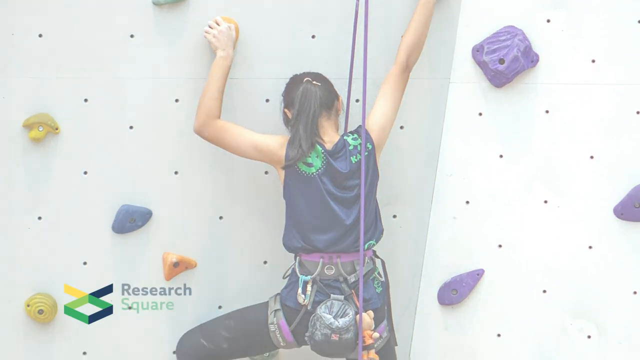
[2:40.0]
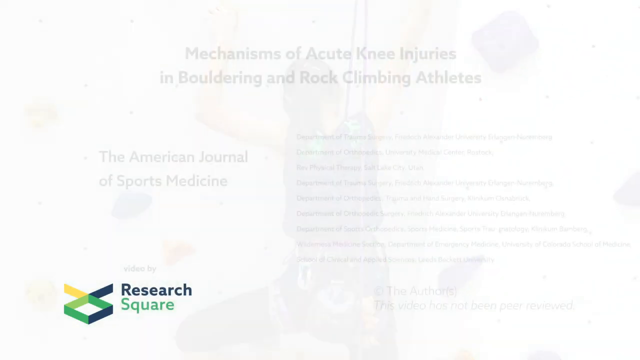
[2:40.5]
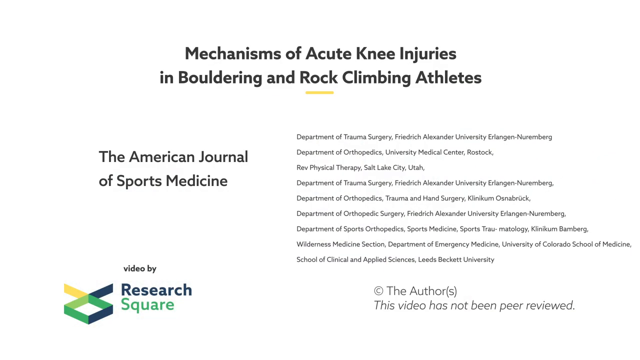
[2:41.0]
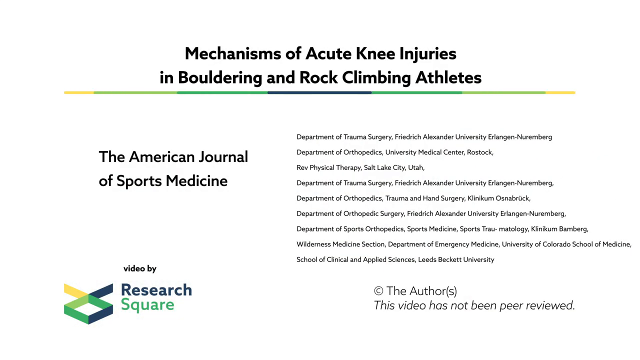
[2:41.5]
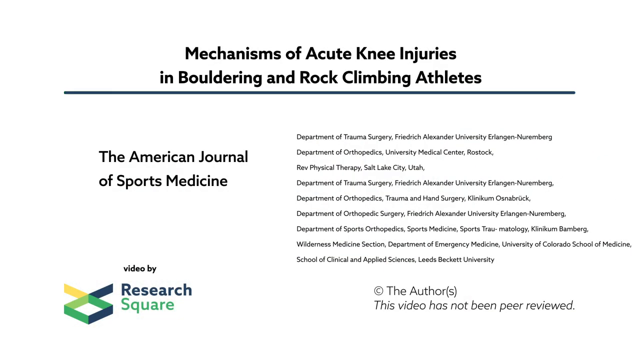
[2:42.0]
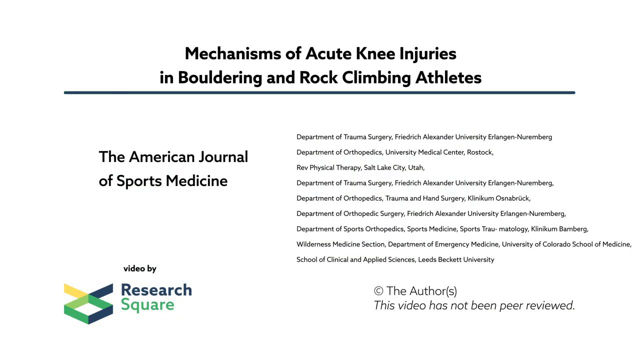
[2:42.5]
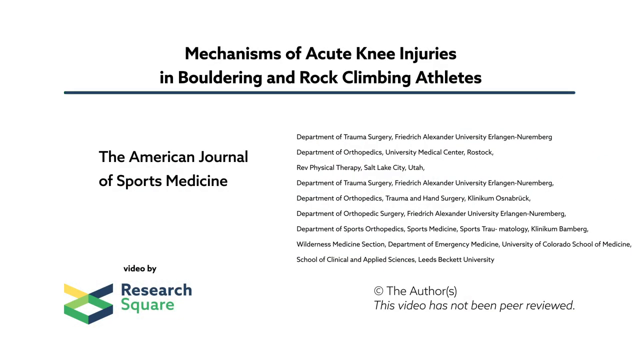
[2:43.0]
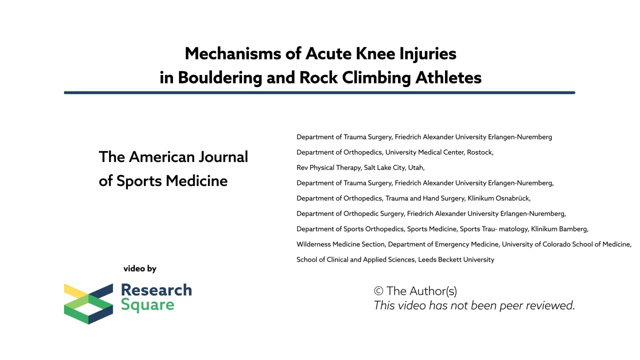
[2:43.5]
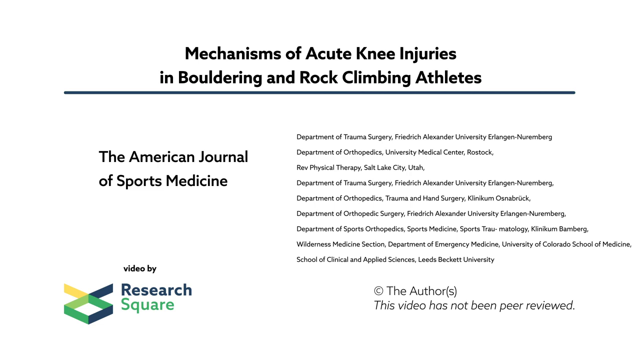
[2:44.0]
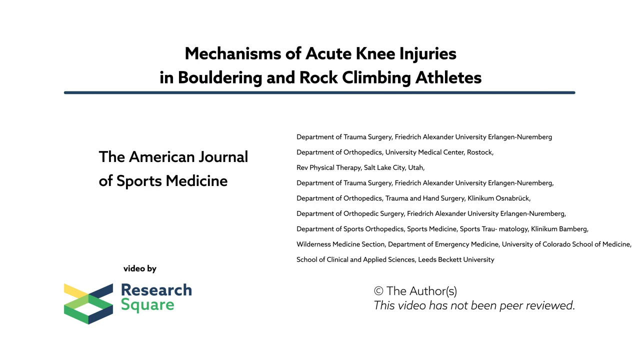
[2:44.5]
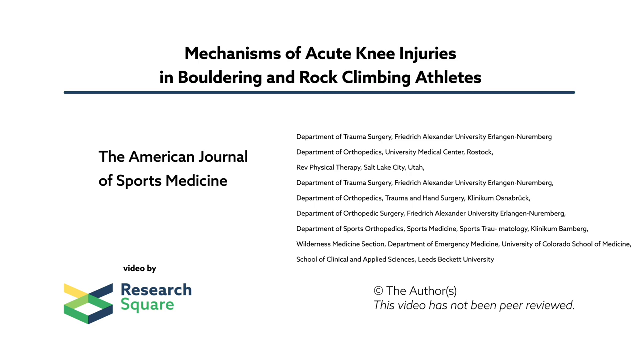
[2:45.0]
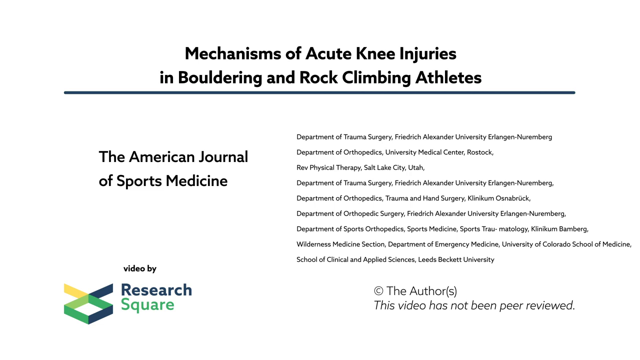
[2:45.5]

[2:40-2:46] A woman on a climbing wall wears a blue-purple shirt. The shot fades out, and "research square" appears at the bottom of the screen, with a green square to its left, kind of viewed from above, with a line coming from its top left; the square looks more like a diamond. The picture fades out. On a white background, text reads "mechanisms of acute knee injury and bouldering and rock climbing athletes". Below that on the left it says "the American Journal of Sports Medicine", with a bunch of writing to the right. Below the writing is a symbol, with "the authors" to its right, and the text "this video has not been peer-reviewed".